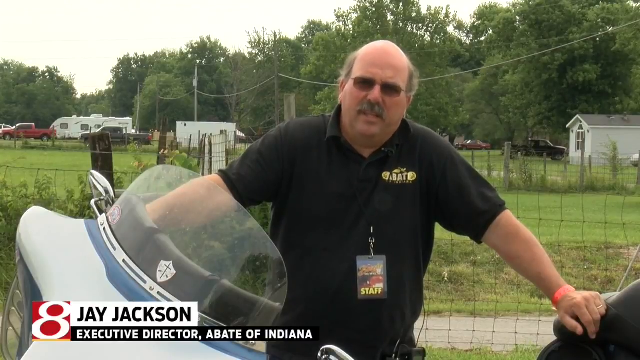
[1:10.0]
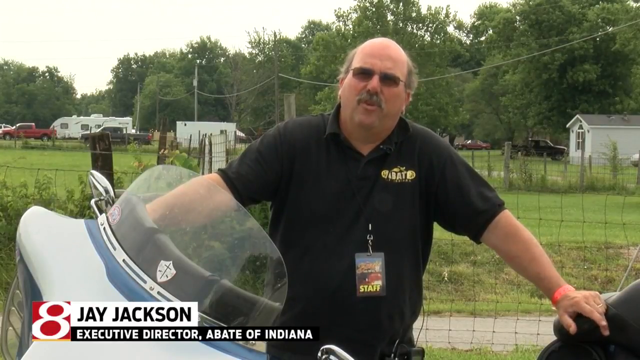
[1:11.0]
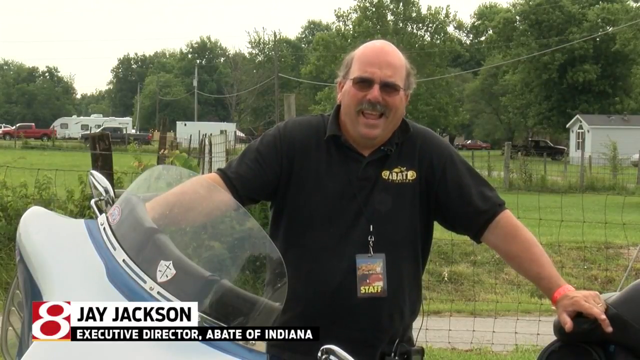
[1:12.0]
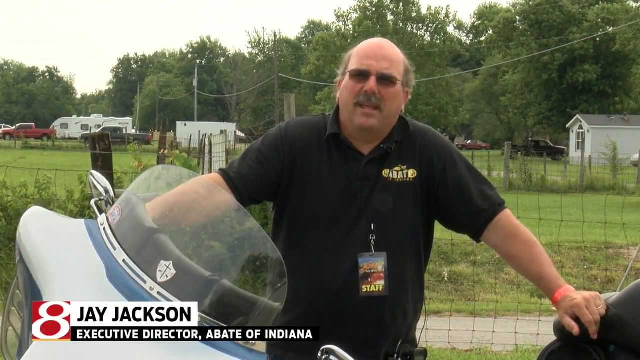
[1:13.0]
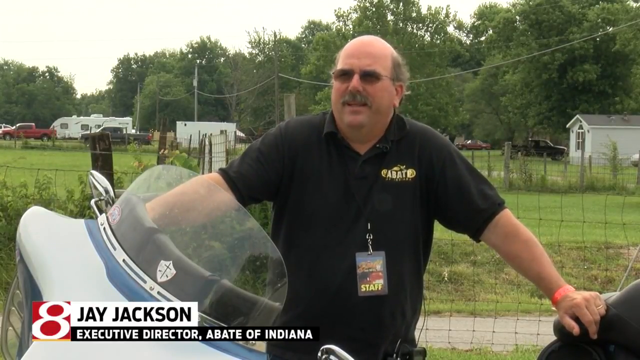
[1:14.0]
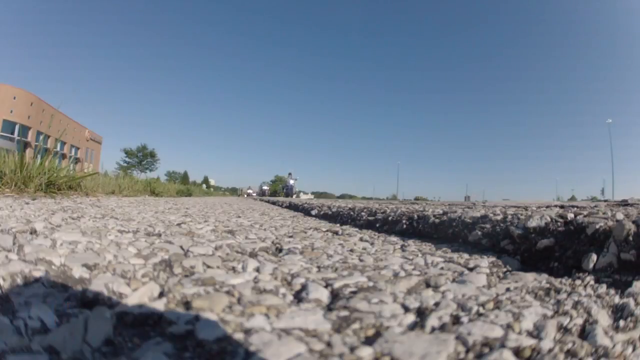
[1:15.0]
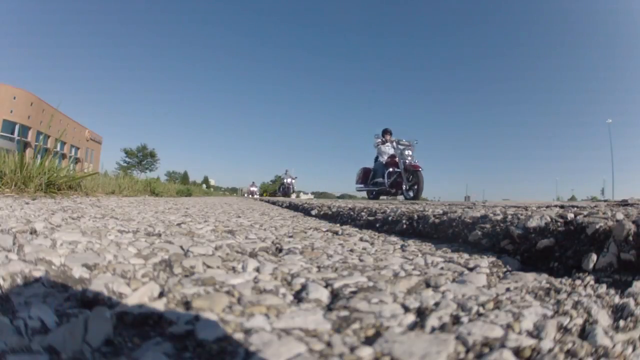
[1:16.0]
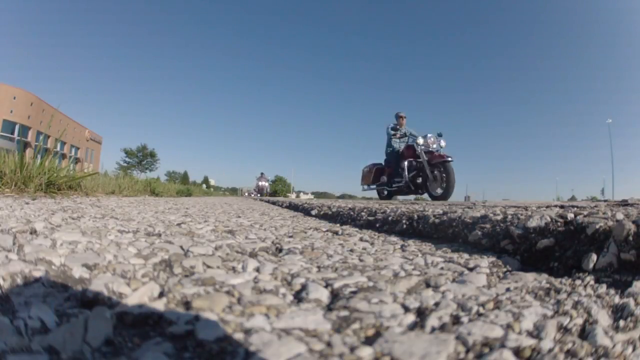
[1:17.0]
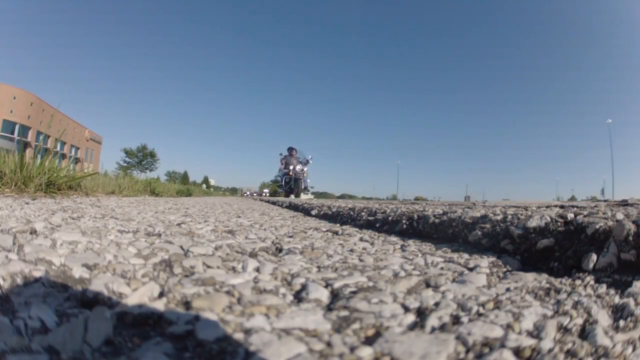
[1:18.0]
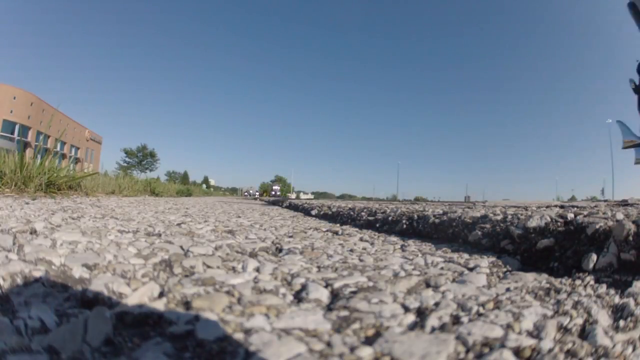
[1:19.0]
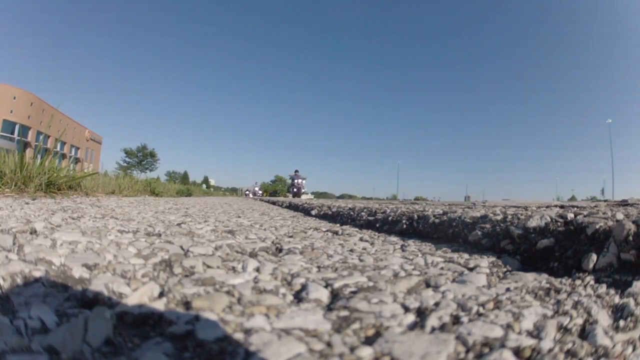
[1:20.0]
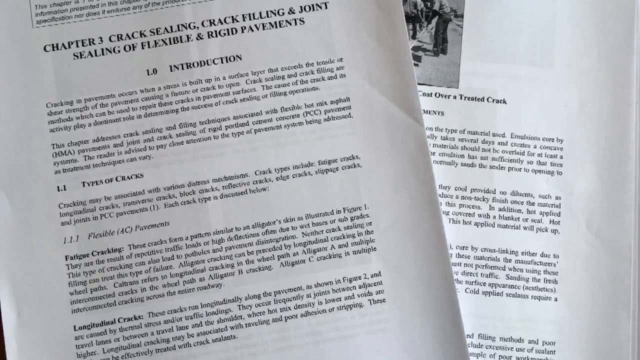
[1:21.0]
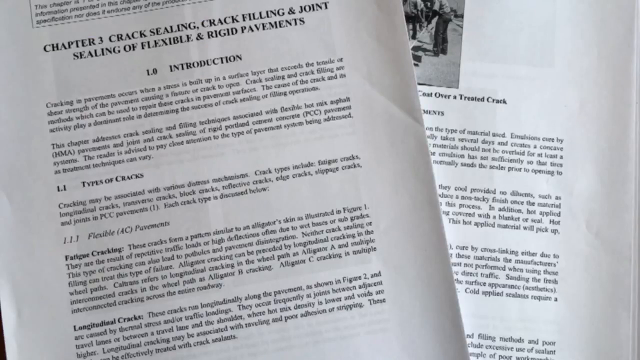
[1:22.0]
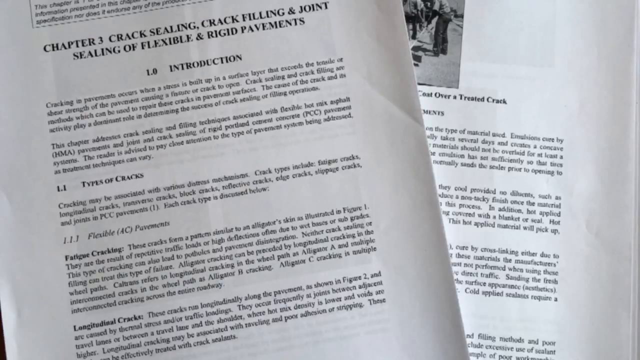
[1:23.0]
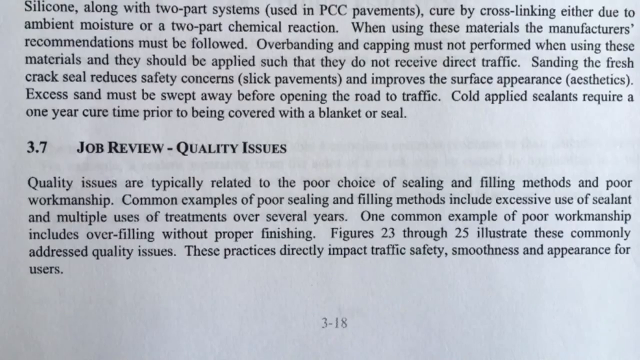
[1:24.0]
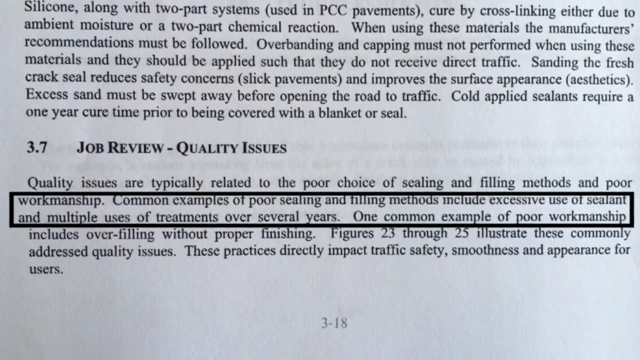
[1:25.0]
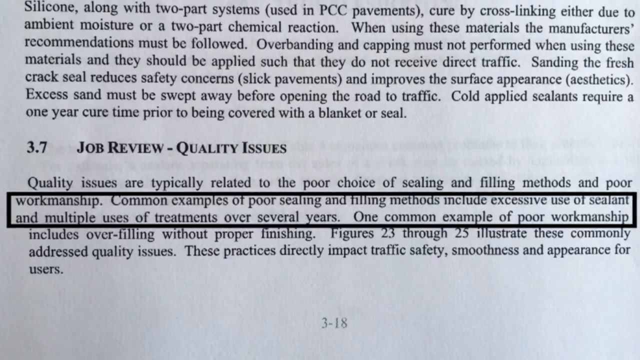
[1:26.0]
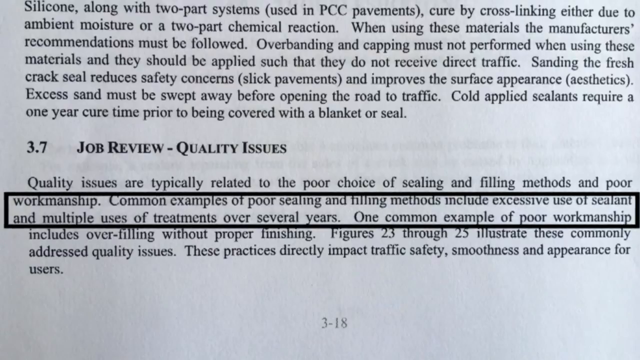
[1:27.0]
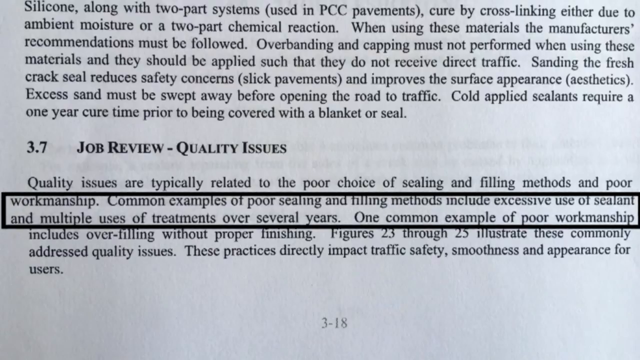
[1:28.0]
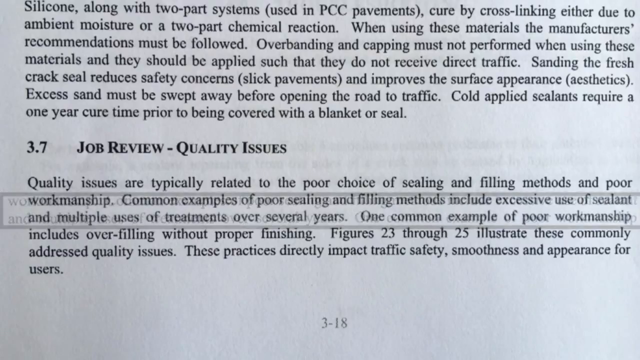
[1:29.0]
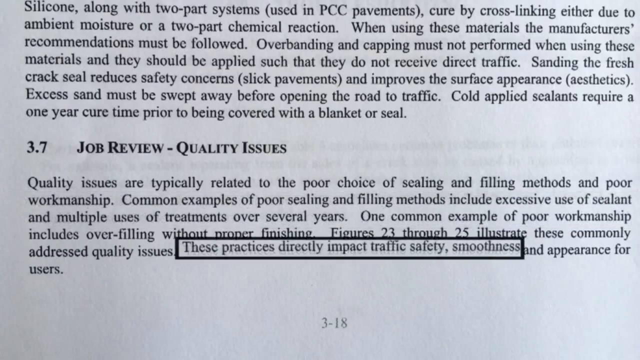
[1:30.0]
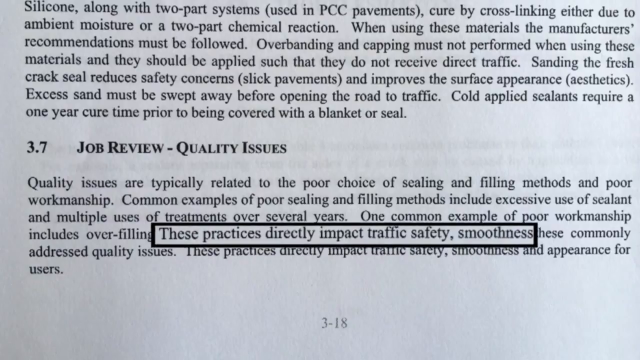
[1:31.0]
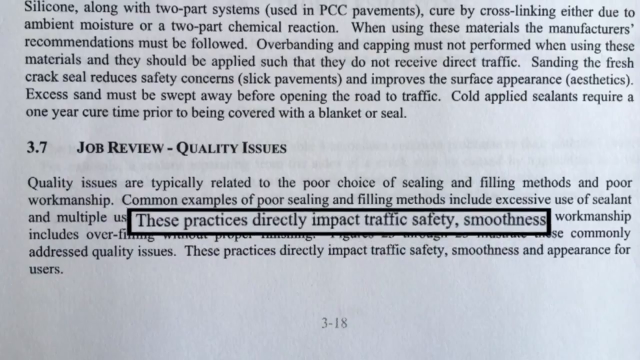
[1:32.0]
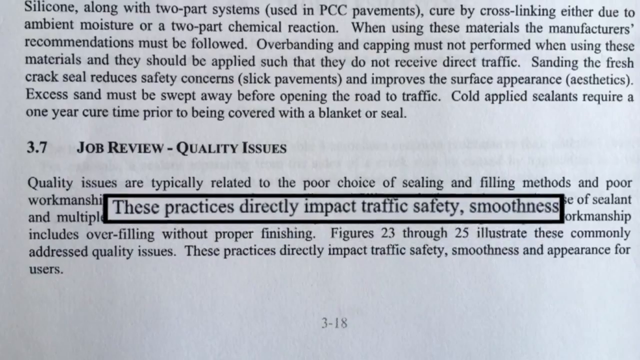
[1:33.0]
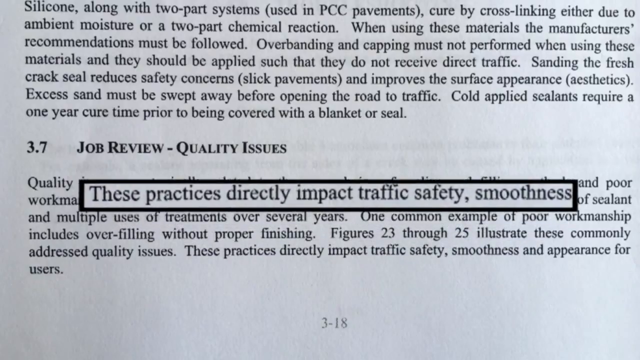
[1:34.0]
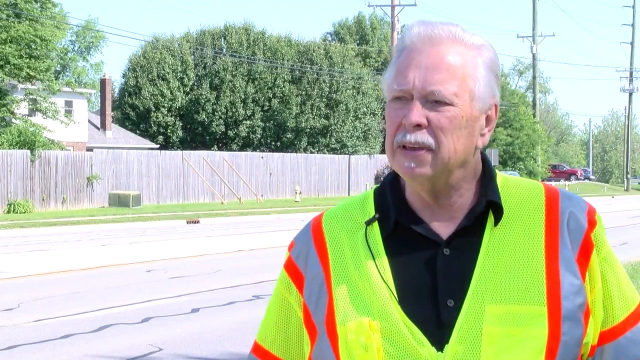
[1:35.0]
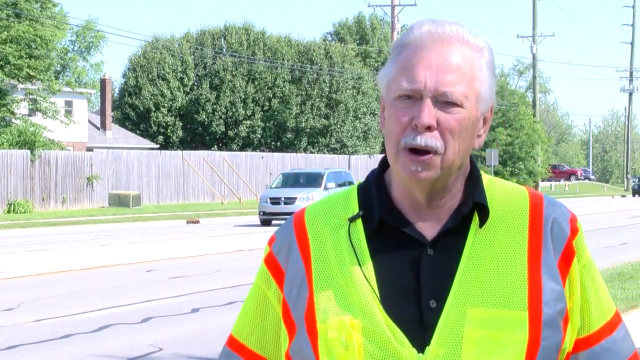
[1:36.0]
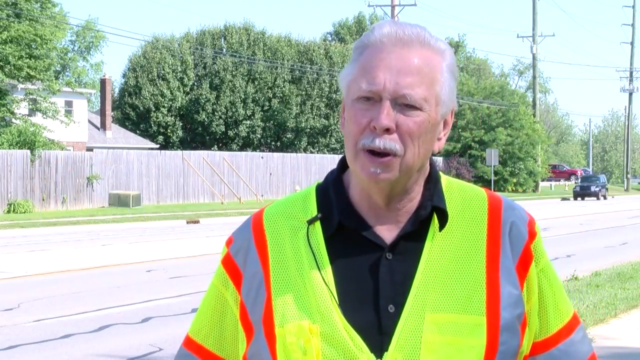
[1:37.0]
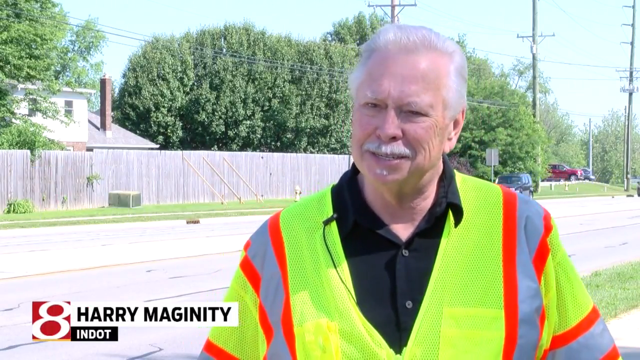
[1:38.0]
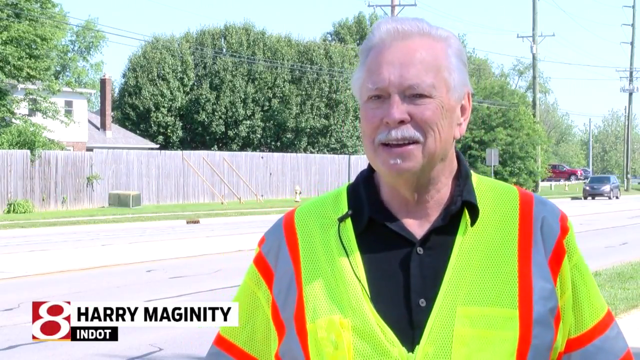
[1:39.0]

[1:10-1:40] On News Channel 8 in Indiana, Jay Jackson, executive director of Abate of Indiana, is interviewed. He is in his mid to late 50s, bald, with glasses and a mustache, and wears a black short-sleeved shirt that says "Abate" with a motorcycle and has "staff" on it. He leans on his motorcycle while apparently being interviewed by News Channel 8, with a field behind him. A street-level shot shows motorcycles coming at the camera. Then text appears: "Chapter three, crack sealing, crack filling, and joint sealing of flexibility and rigid pavement." A close-up follows of "common examples of poor sealing and filling methods includes excessive use of sealant in multiple uses of treatments over several years."